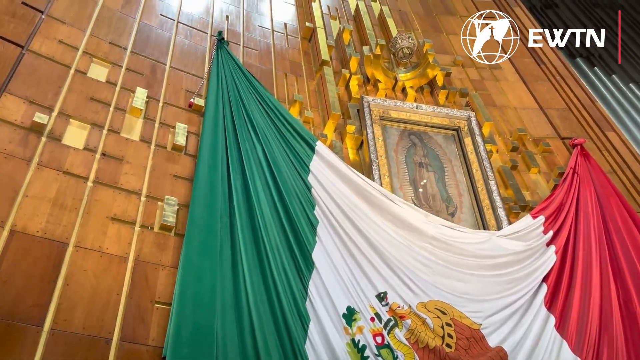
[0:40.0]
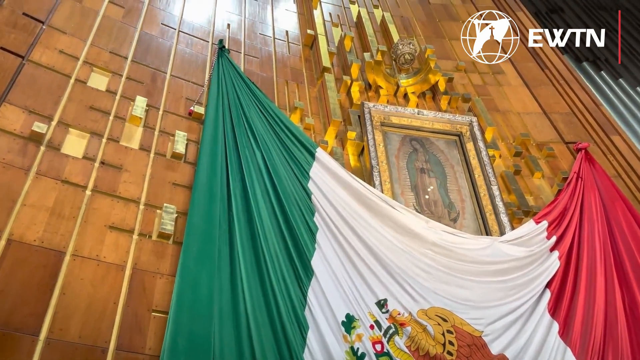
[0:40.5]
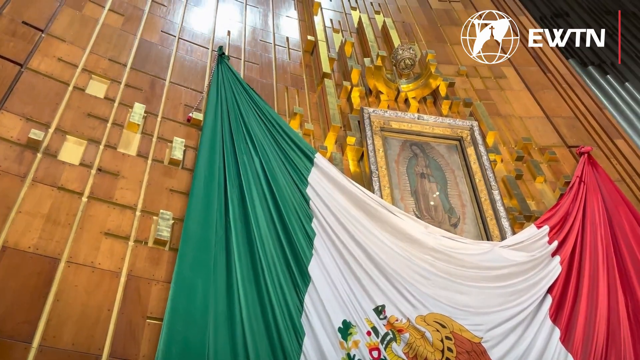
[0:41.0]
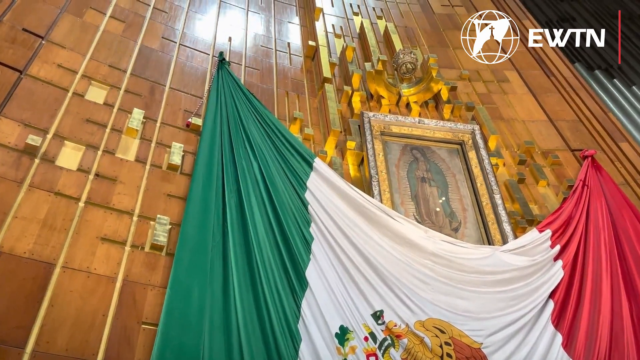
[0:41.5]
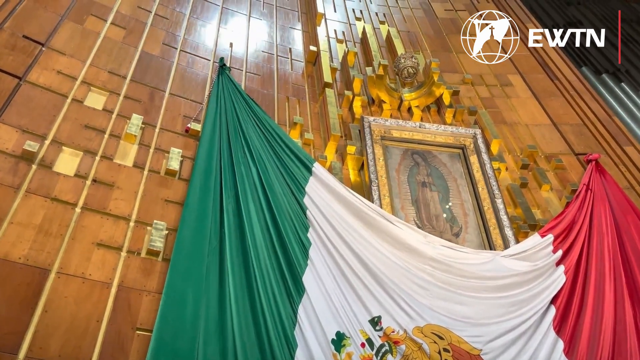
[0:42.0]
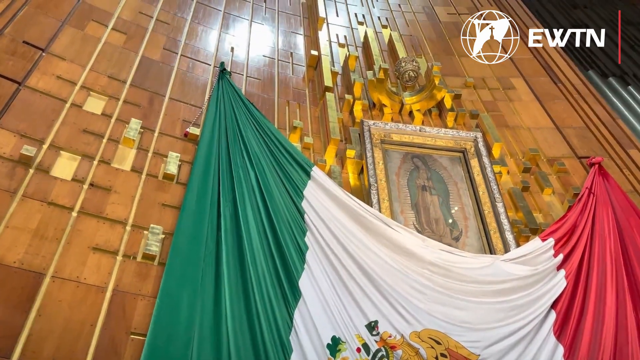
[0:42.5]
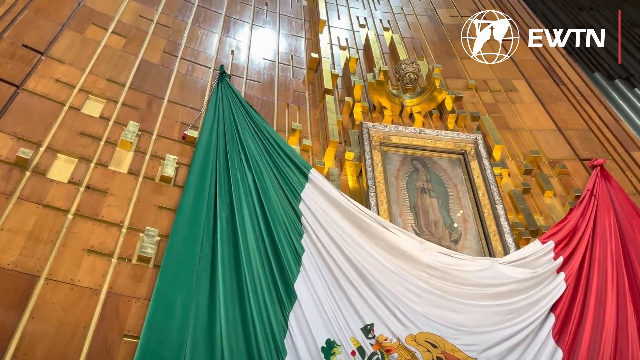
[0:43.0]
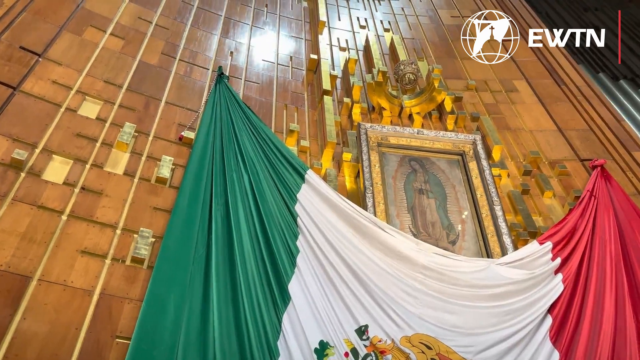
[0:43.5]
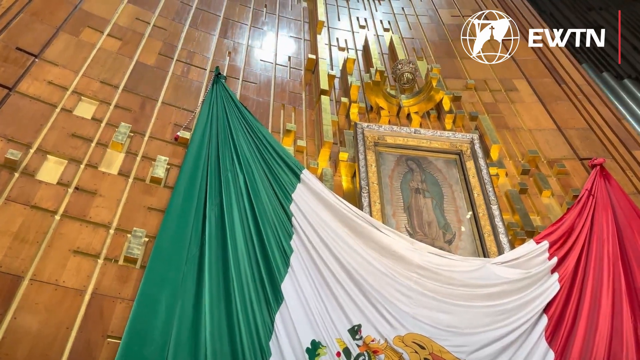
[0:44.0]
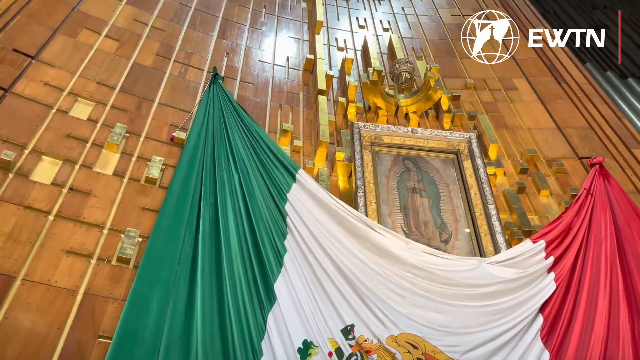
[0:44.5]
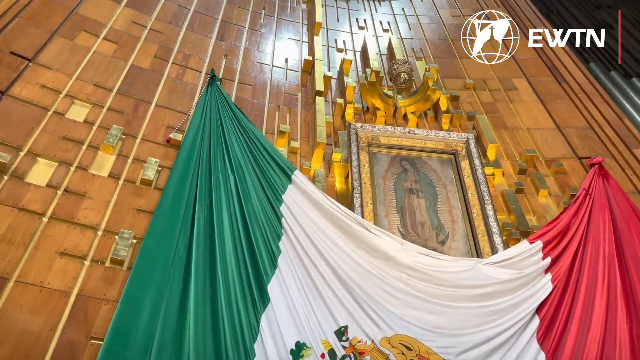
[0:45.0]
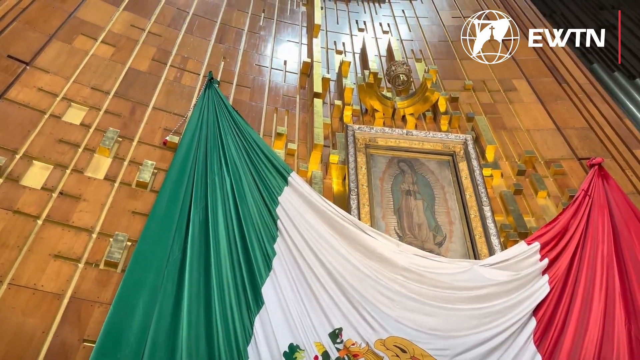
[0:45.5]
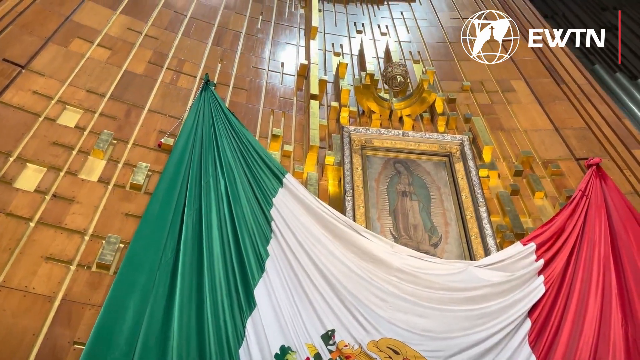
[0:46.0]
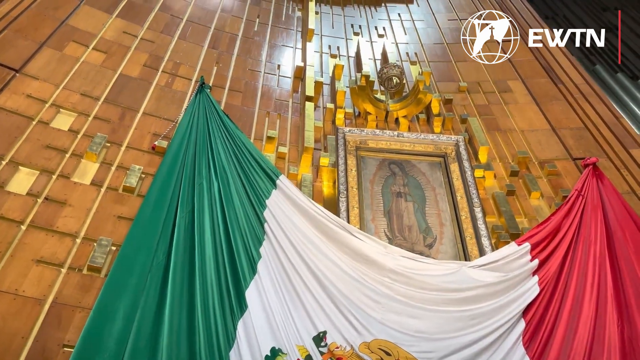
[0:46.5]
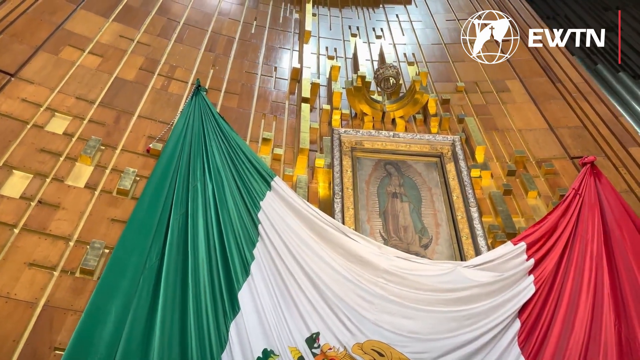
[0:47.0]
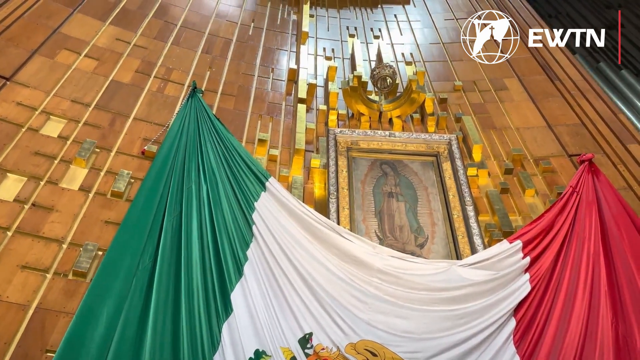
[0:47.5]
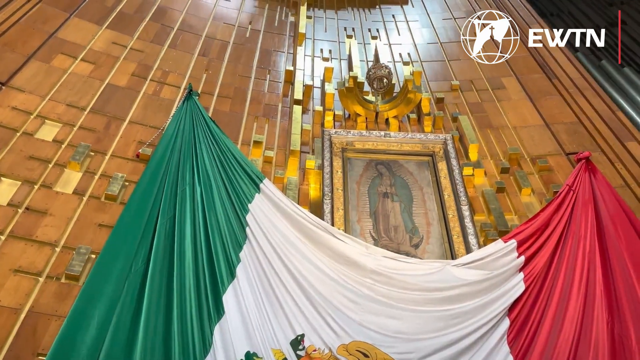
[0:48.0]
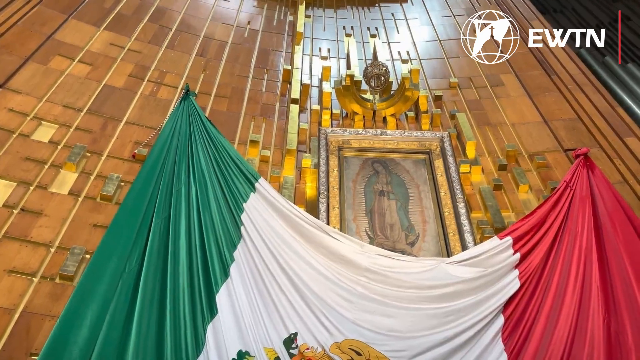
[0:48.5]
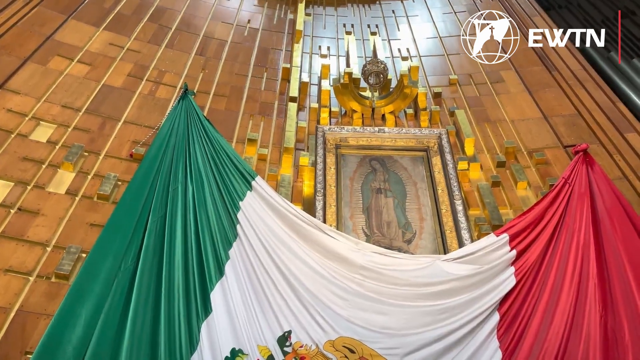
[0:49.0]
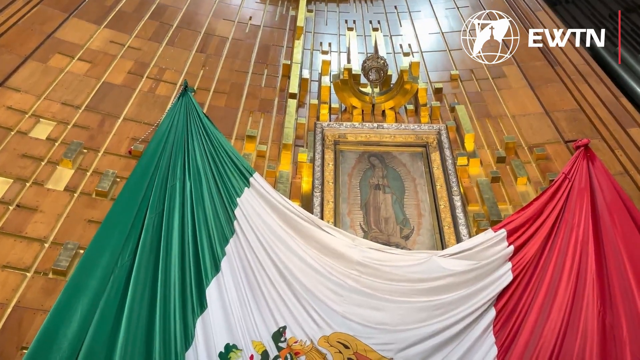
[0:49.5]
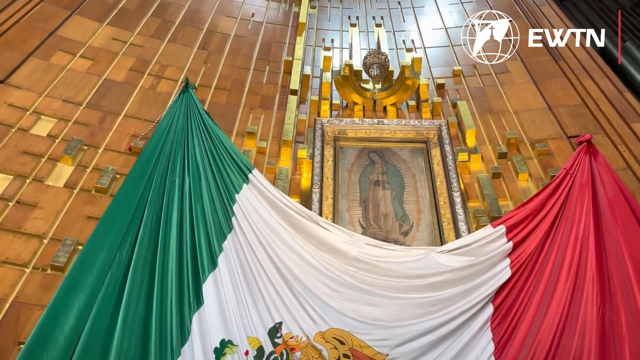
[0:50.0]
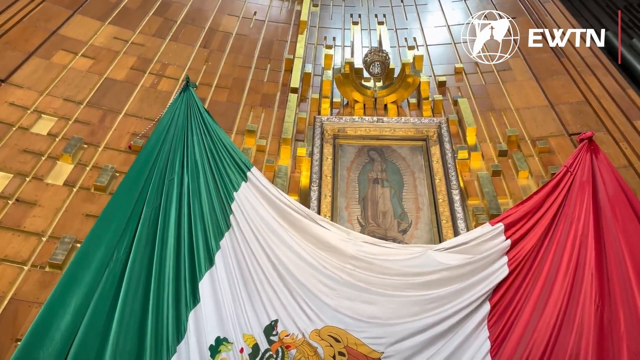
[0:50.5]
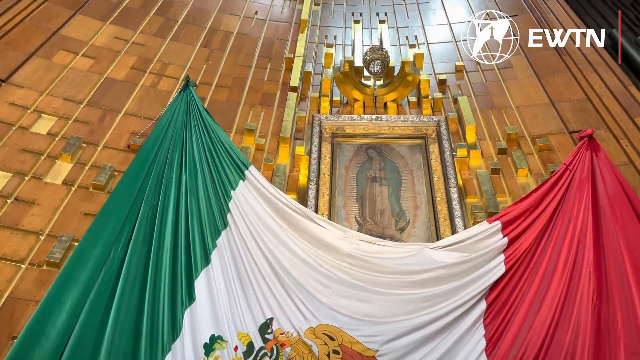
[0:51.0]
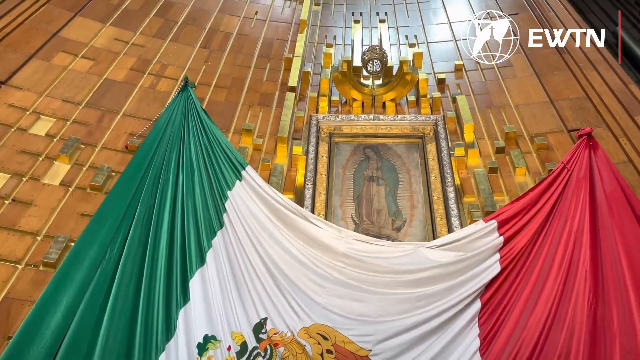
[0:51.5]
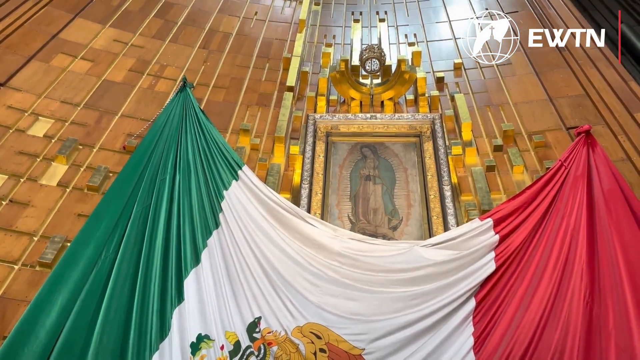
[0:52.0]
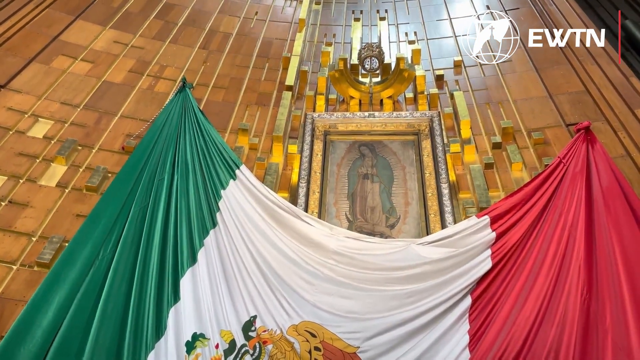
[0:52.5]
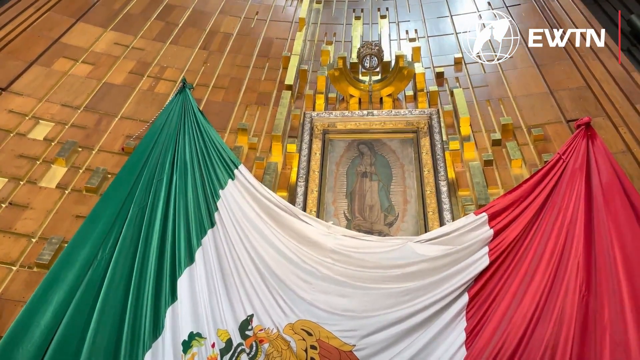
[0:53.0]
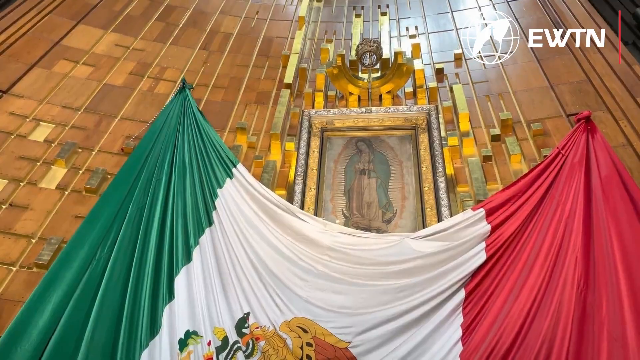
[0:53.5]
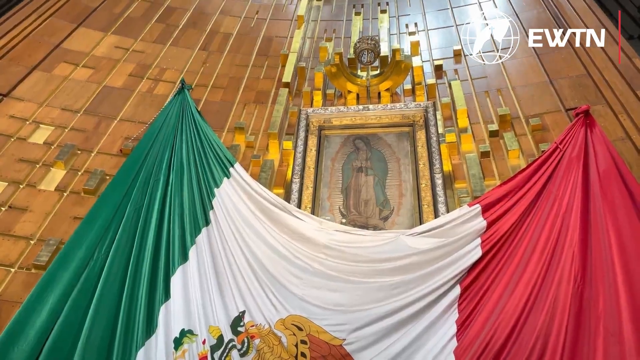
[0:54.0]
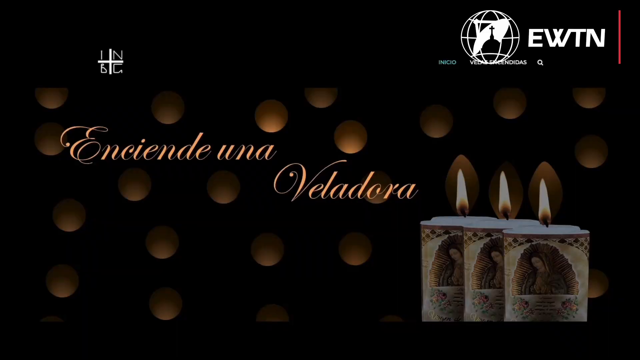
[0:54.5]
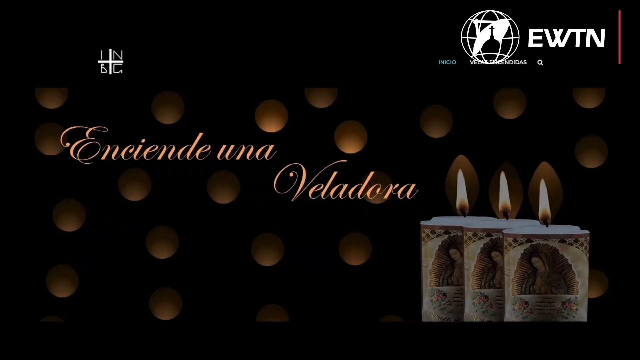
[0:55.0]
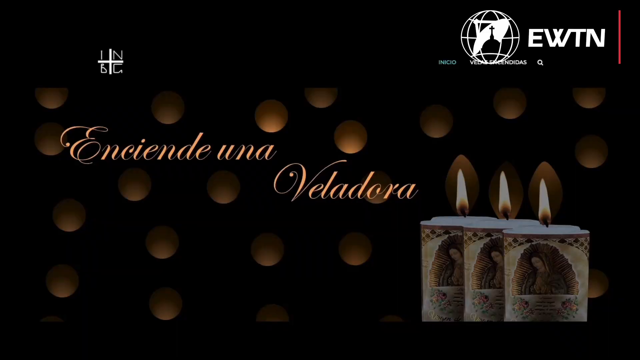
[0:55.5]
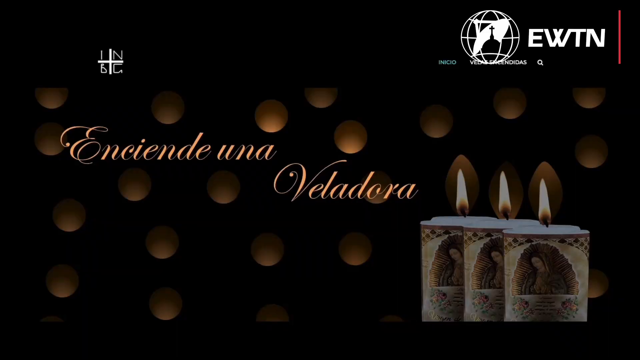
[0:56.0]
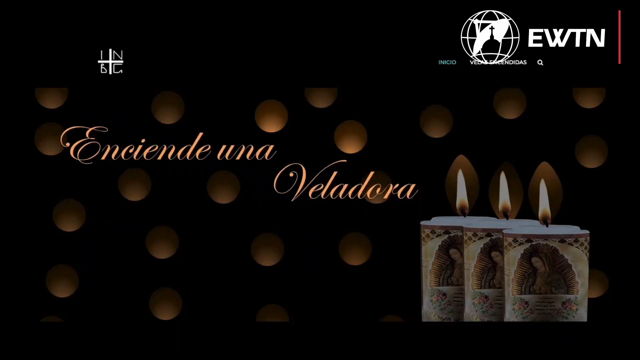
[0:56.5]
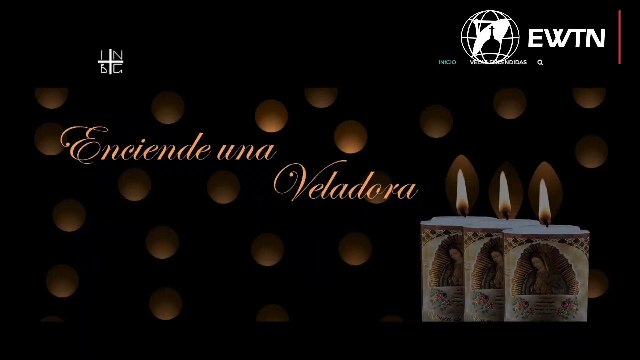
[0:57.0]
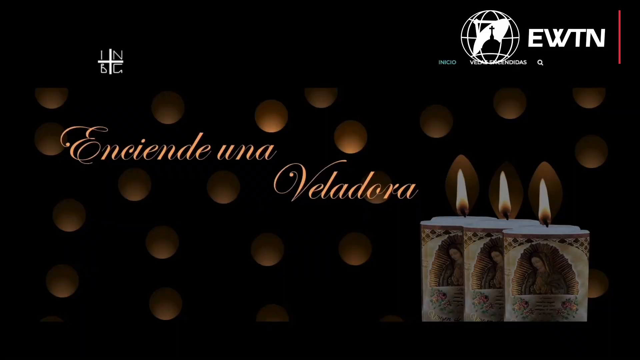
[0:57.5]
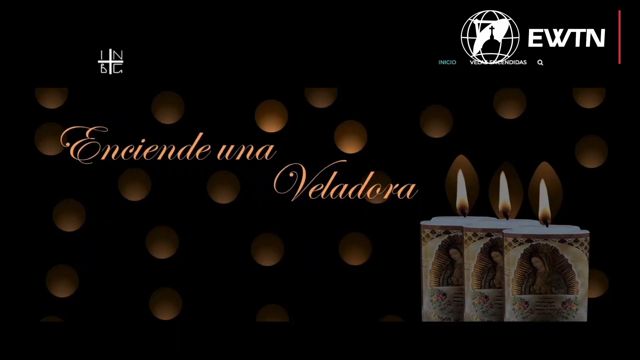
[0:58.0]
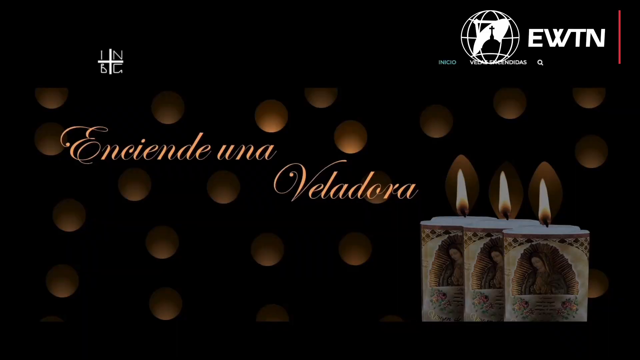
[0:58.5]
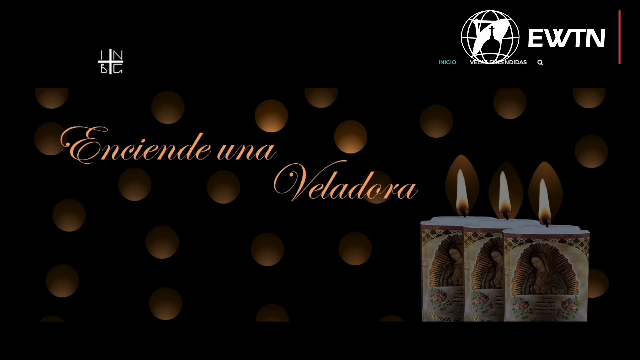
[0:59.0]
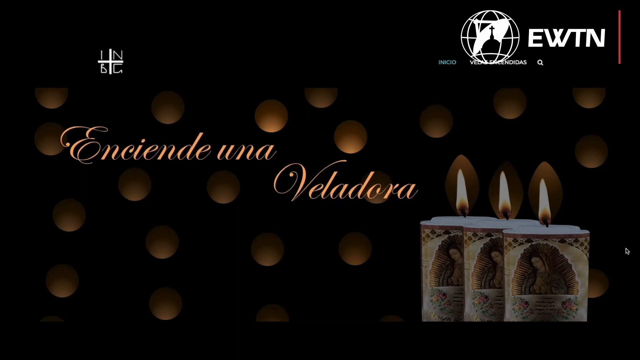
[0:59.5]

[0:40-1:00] The camera stays focused on the frame of the Virgin Mary. The frame has two layers: the inner layer is gold and the outer layer is silver or metallic in color. The wall it hangs on appears to be very high, and the wall is brown. The camera continues to pan from left to right, showing a little more of the flag, on which an orange-colored animal, perhaps some type of bird, is very briefly visible. The scene then changes to a slide that says "Enciende una valedora". Three candles are then shown, kind of staggered right behind each other. All three candles have a lit flame and are designed the same; they look relatively new, and each has a portrait or painting of the same woman on it.